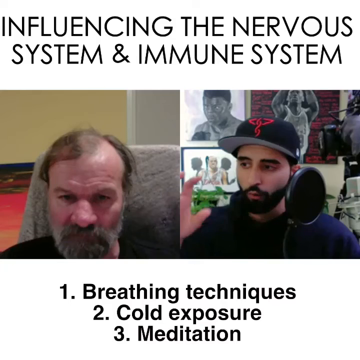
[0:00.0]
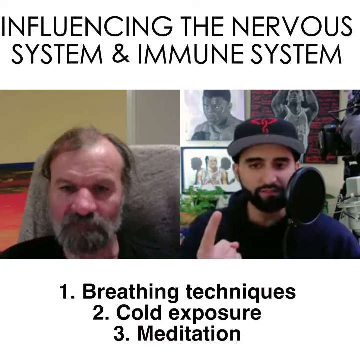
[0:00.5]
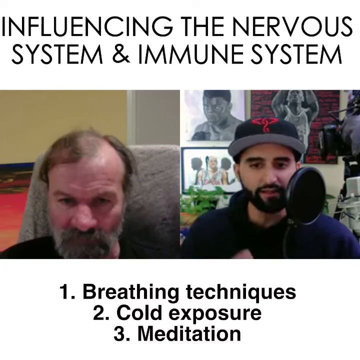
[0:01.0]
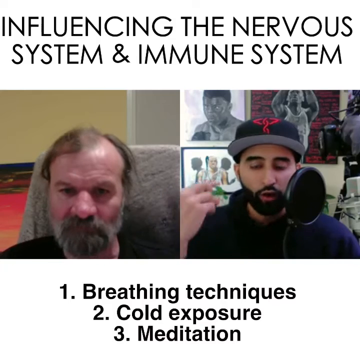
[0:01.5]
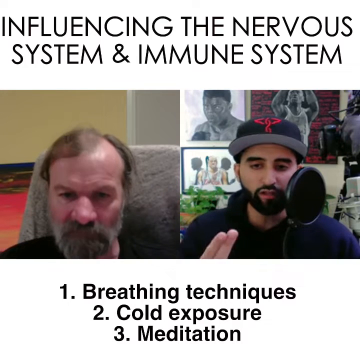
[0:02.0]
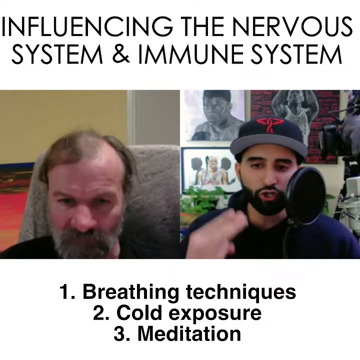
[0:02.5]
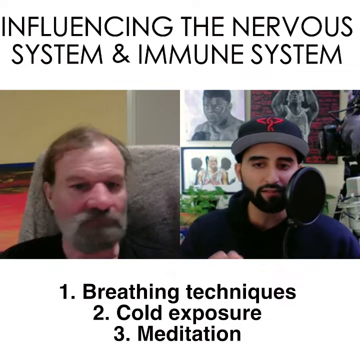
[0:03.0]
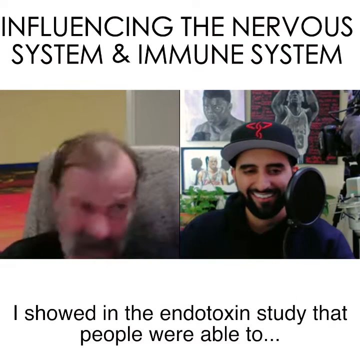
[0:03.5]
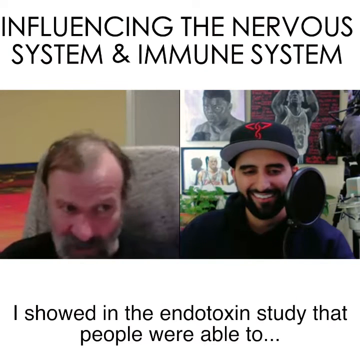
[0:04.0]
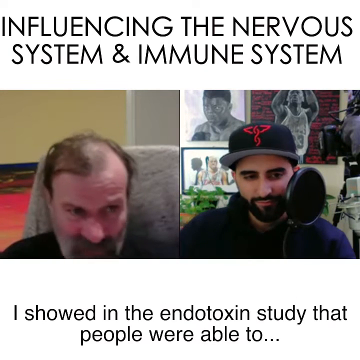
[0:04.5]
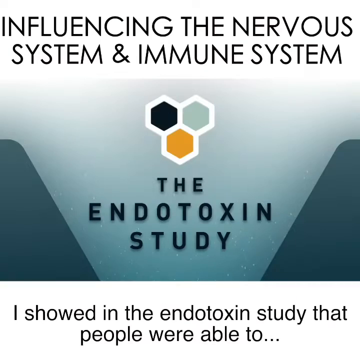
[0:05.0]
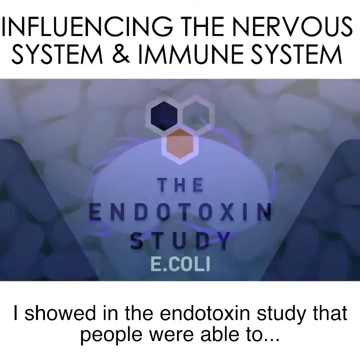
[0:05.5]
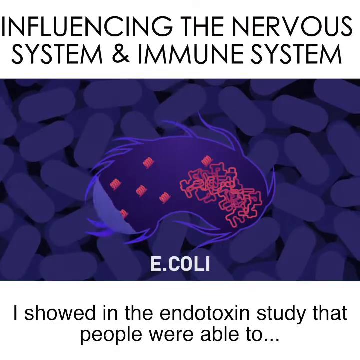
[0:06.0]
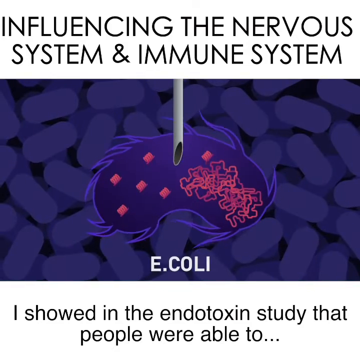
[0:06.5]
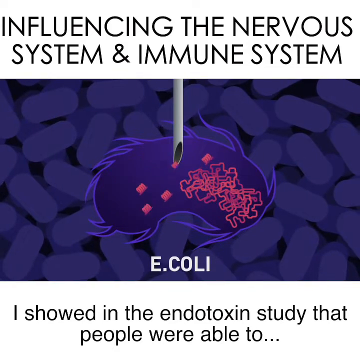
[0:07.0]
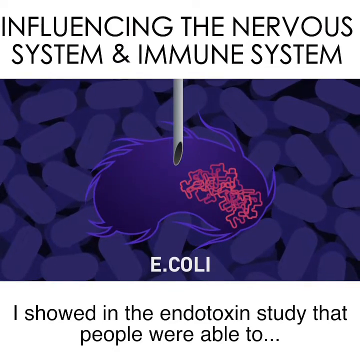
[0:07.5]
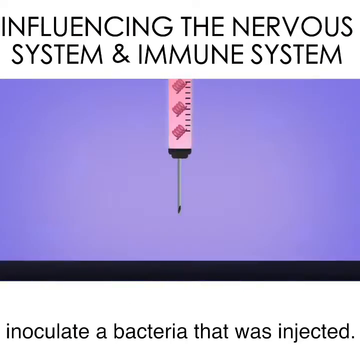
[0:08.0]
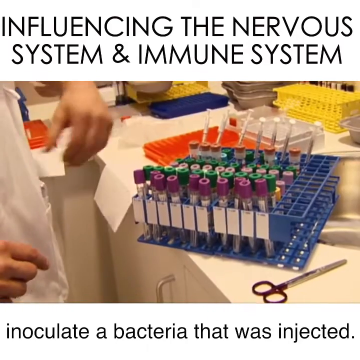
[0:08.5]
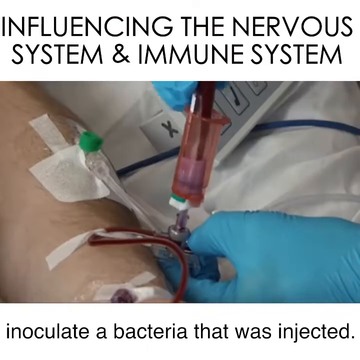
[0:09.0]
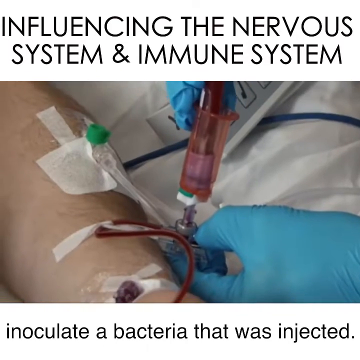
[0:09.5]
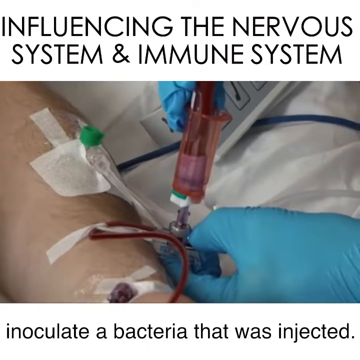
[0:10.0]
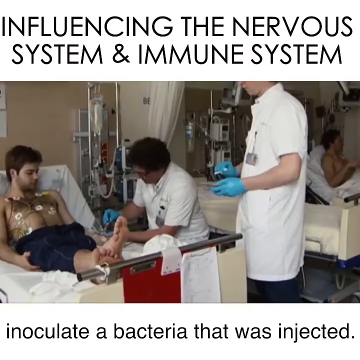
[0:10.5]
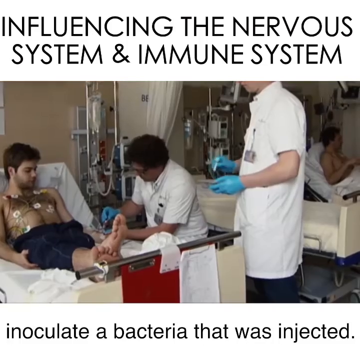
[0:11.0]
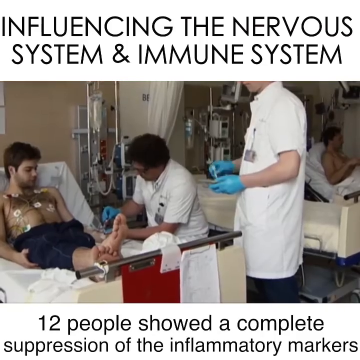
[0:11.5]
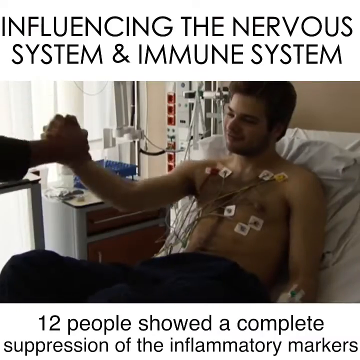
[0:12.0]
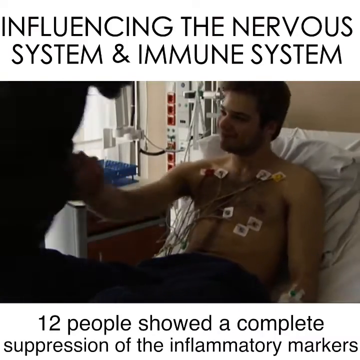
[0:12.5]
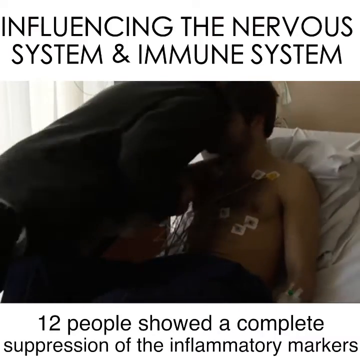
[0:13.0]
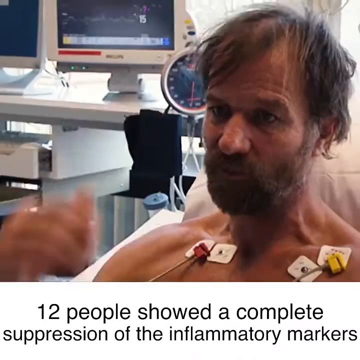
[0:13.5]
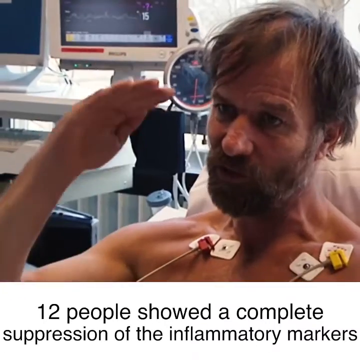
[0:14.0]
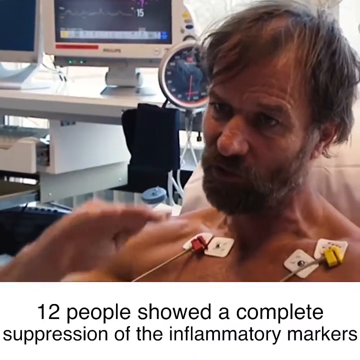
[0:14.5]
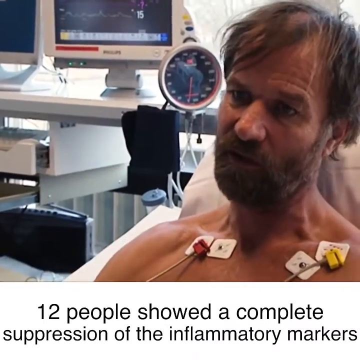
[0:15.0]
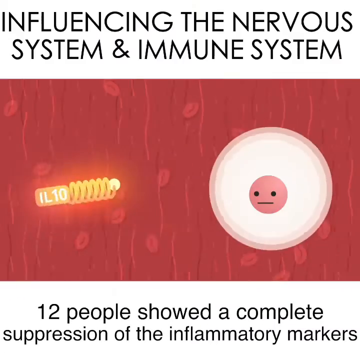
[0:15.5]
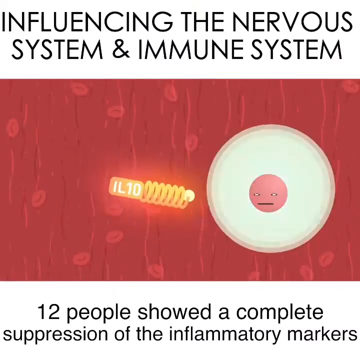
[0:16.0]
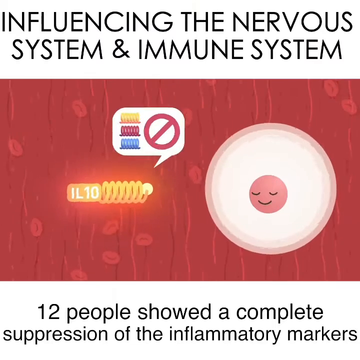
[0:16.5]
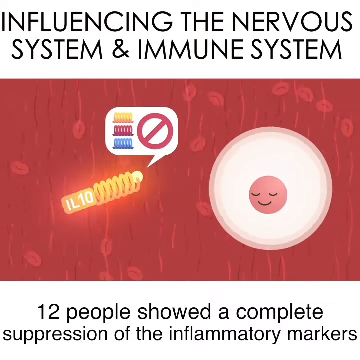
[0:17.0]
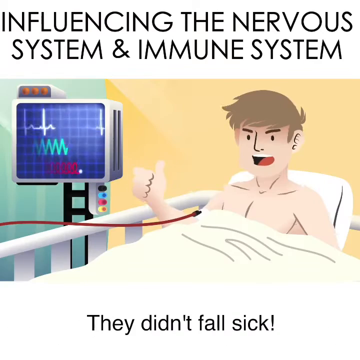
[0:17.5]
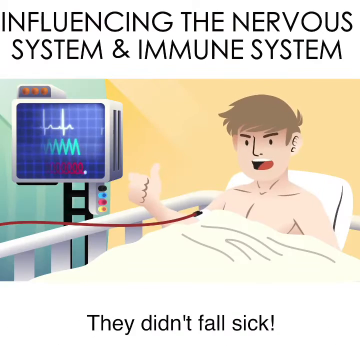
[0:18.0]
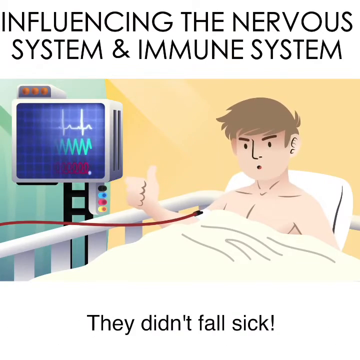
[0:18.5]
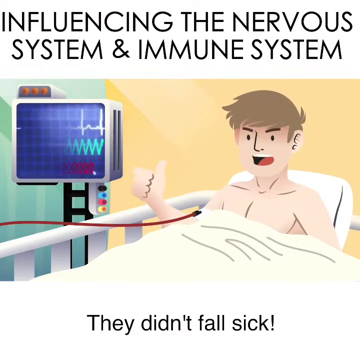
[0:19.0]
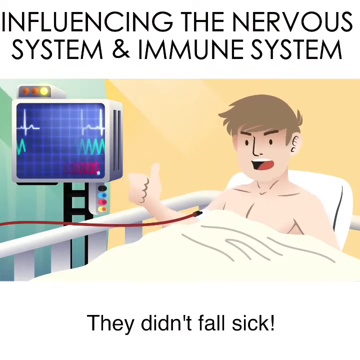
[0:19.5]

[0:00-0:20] The video opens with the text "influencing the nervous system and immune system." Two men are in the middle of the frame, apparently on a video conference call. The man on the left wears a black shirt and has a gray beard; he is sitting in a chair with what looks like a gray towel or blanket on top. The man next to him appears to be in a studio, with a microphone in front of him and different pieces of art of athletes behind him in his back office. Text then reads "one, breathing techniques, two, cold exposure, and three, meditation." The man on the right seems to be talking about it, while the man on the left is sort of agreeing and having a conversation with him. Next the text reads "the endotoxin study," shown with what looks like a couple of hexagons in a beehive pattern, just three of them: one black, one pale green and one goldish. A caption reads "I showed in the endotoxin study that people were able to," over an animation of what looks like an E. coli cell with red squiggly lines in the middle. A needle punctures the cell and is apparently sort of vacuuming the bacteria out of it. The caption continues "inoculate a bacteria that was injected," and the needle has the bacteria inside it. The scene moves to a lab room, where a bunch of vials are in a blue organizer and a lot of office stuff, including scissors, is on the counter. Next, someone wearing blue gloves is doing an IV injection in someone's arm, taking blood. A couple of people are laying in hospital beds with two nurses standing above them, and one of the men in the hospital beds gives the doctor a high five. A caption reads "12 people showed a complete suppression of the inflammatory markers." The man from the video call is laying in a hospital bed. An animation shows a cell that seems to have no information getting to it. Another animation shows a man in a hospital bed, hooked up to machines and giving a thumbs up, with the text "they didn't fall sick"; these are apparently the people involved in the study.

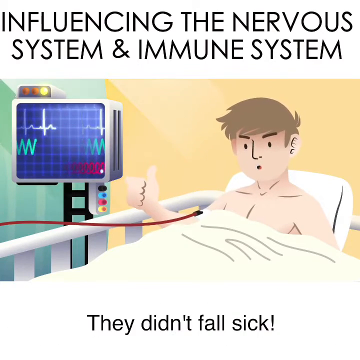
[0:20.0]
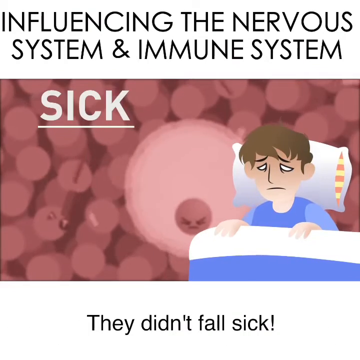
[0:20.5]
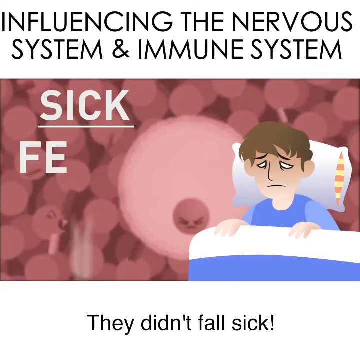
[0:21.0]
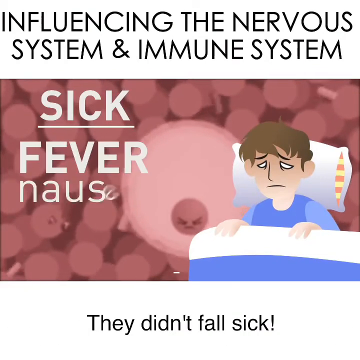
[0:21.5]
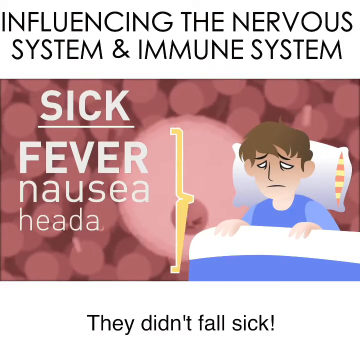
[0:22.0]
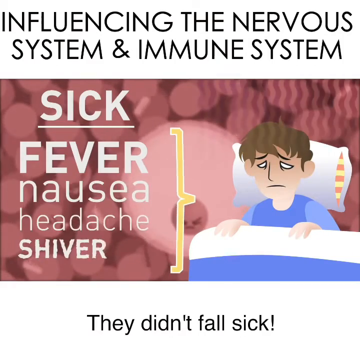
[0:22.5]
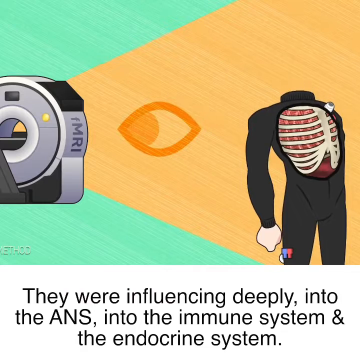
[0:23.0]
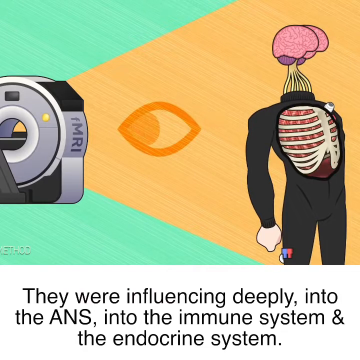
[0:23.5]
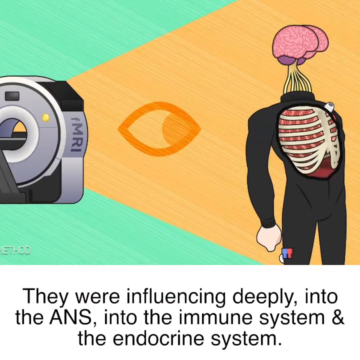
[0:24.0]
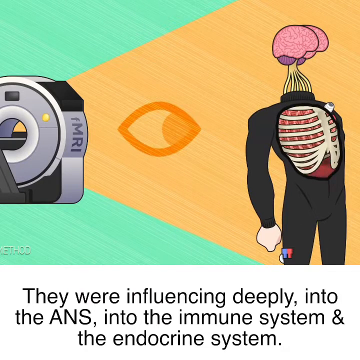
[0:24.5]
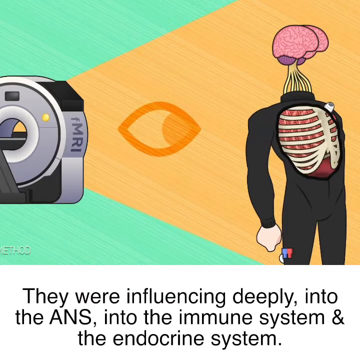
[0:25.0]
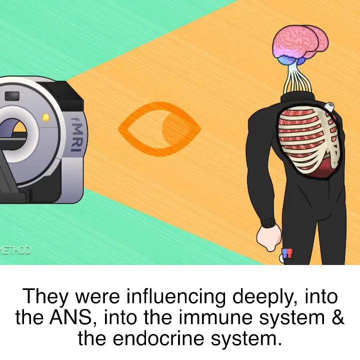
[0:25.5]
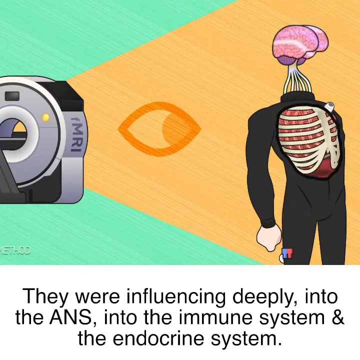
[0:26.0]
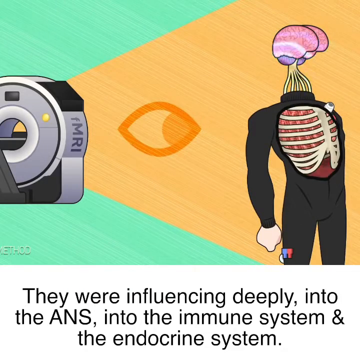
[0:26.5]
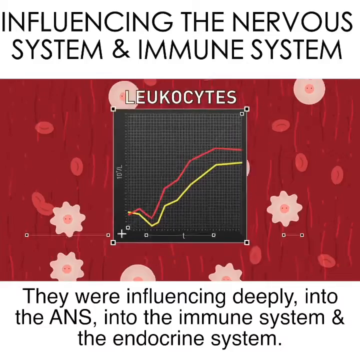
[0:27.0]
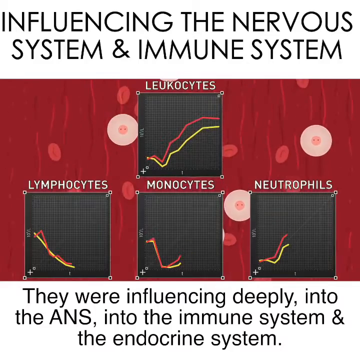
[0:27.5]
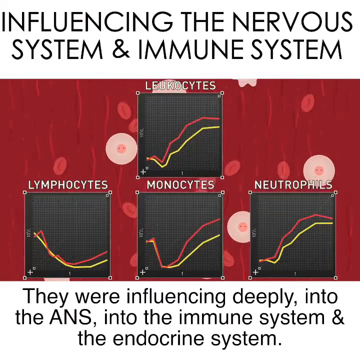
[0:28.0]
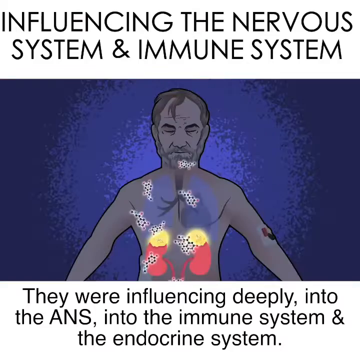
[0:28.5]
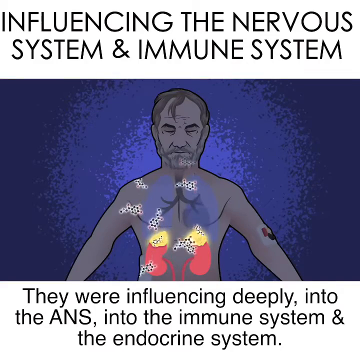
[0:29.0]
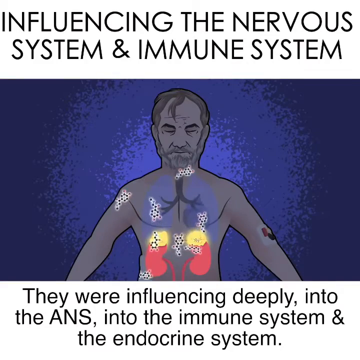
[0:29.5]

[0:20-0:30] After "they didn't fall sick," another animation shows a sick person in bed, laying on a pillow in a blue top and apparently under the covers, with a bunch of germs behind them. The word "sick" appears underlined, along with "fever nausea headache shivering." The next scene reads "they were influencing deeply into the ans into the immune system and the endocrine system," showing an MRI machine and someone's body with a brain on it and an eyeball in the middle, sort of looking to the left. The following scene, with the same text, shows an animation of leukocytes, lymphocytes, monocytes and neutrophils on a graph showing how the immune system was affected. A man, apparently the man from the study with the hair, has a bunch of different things going on inside him: the top of his chest is blue, the middle, apparently the top of his lungs, is yellow, and the bottom is red, with a bunch of cells moving around, apparently showing how the immune system was influenced.